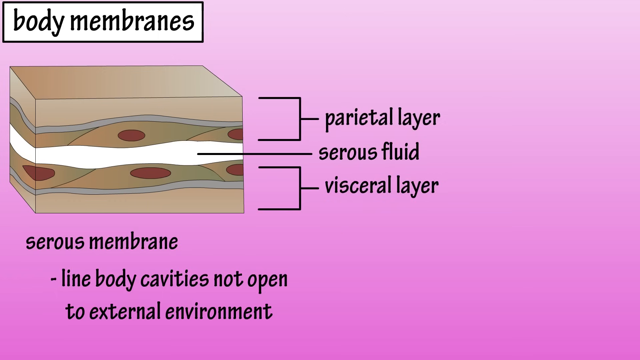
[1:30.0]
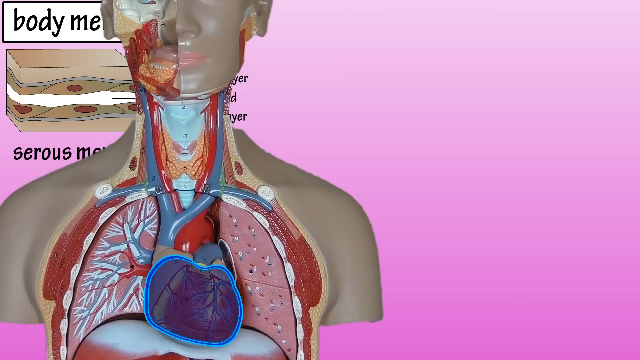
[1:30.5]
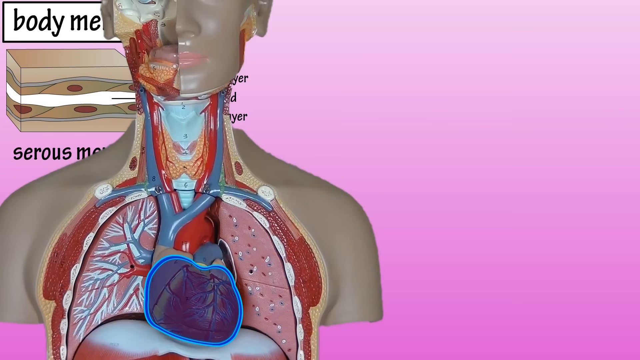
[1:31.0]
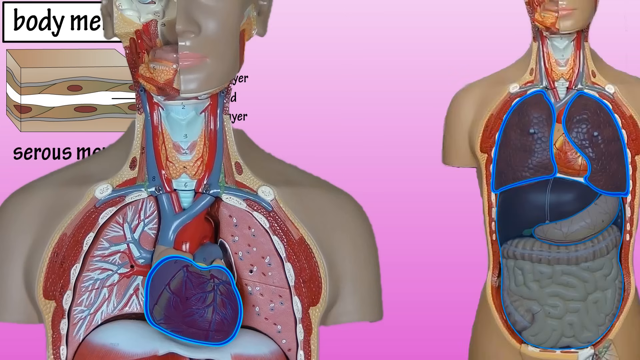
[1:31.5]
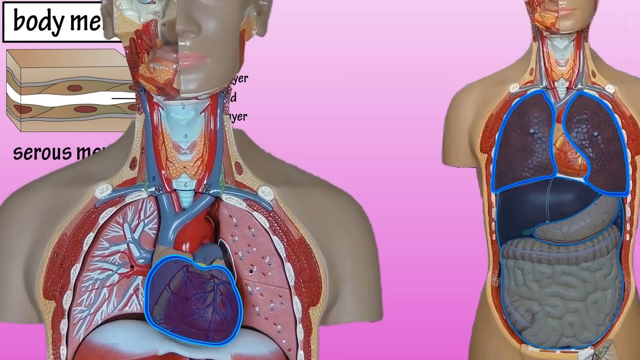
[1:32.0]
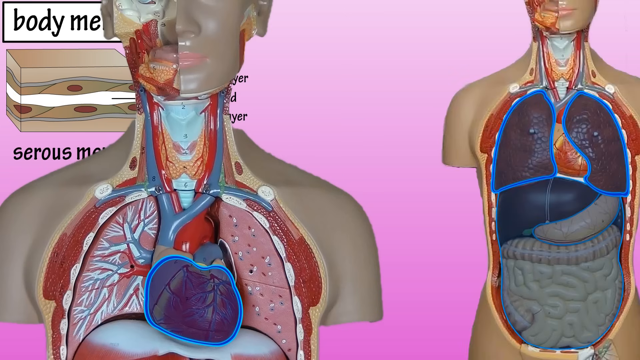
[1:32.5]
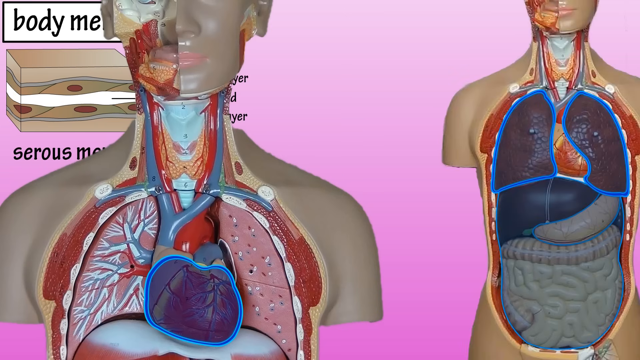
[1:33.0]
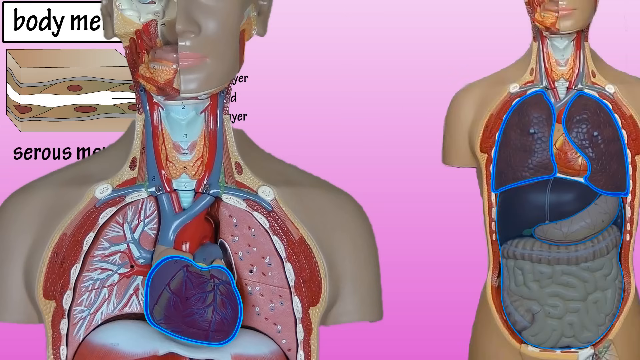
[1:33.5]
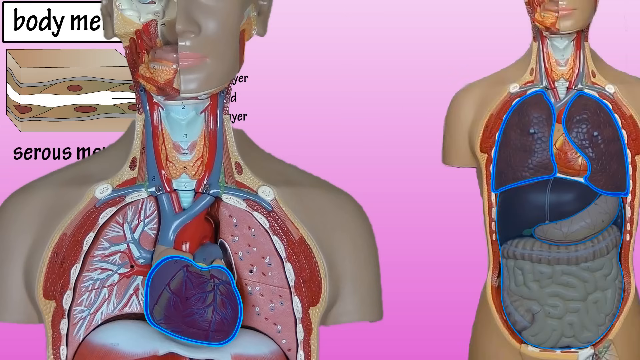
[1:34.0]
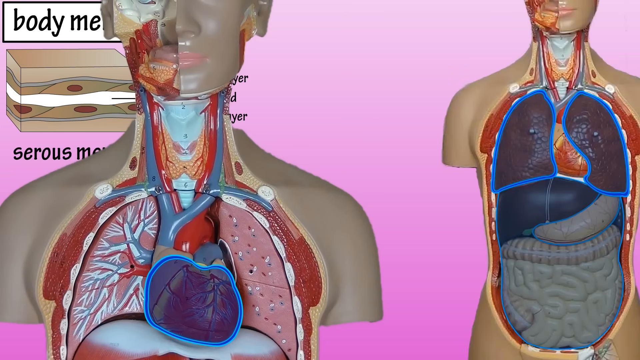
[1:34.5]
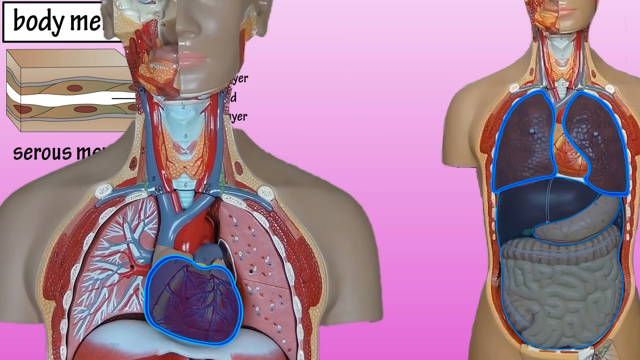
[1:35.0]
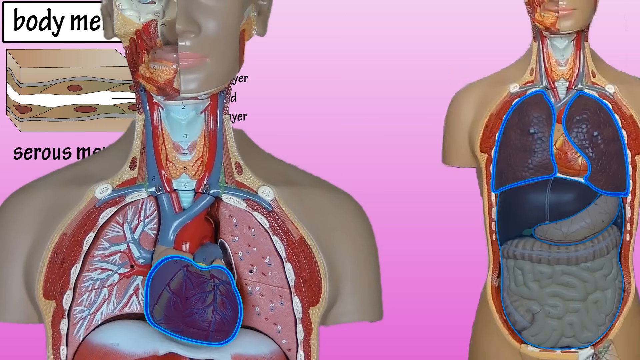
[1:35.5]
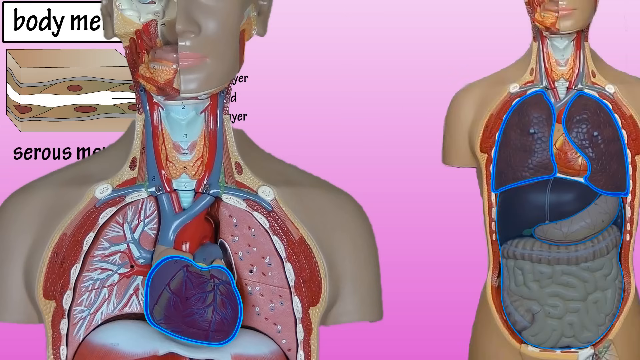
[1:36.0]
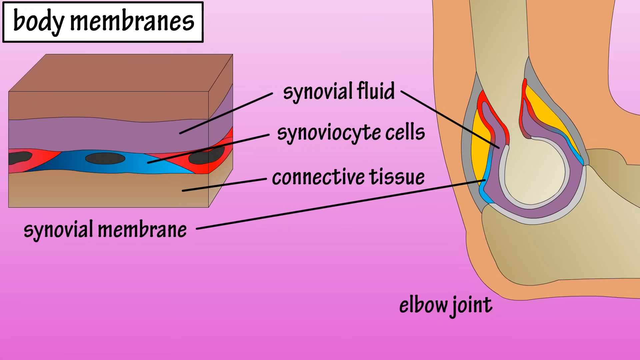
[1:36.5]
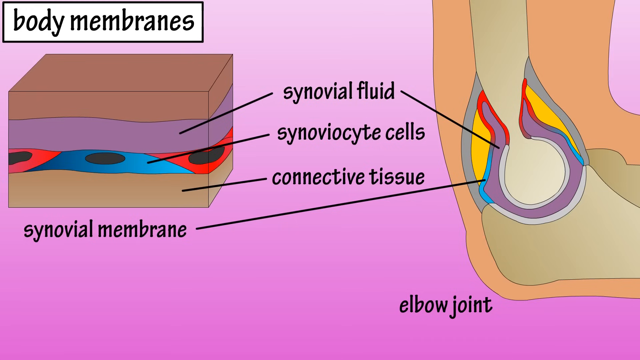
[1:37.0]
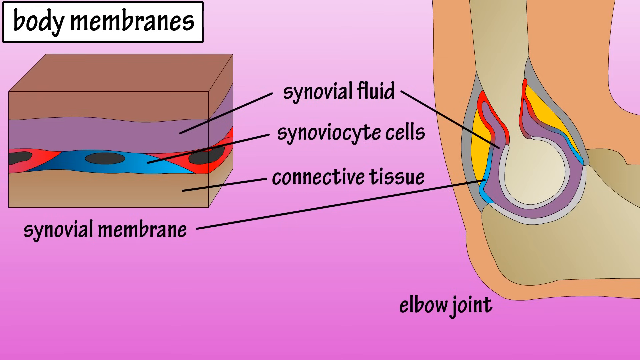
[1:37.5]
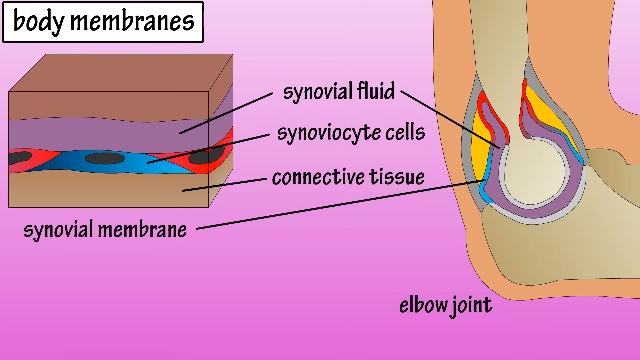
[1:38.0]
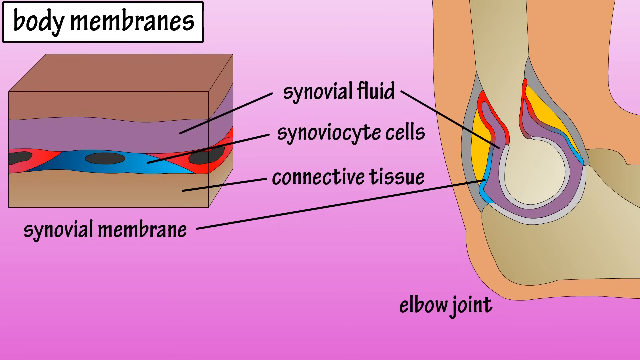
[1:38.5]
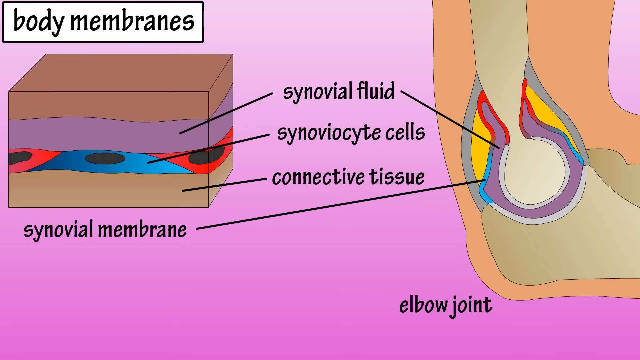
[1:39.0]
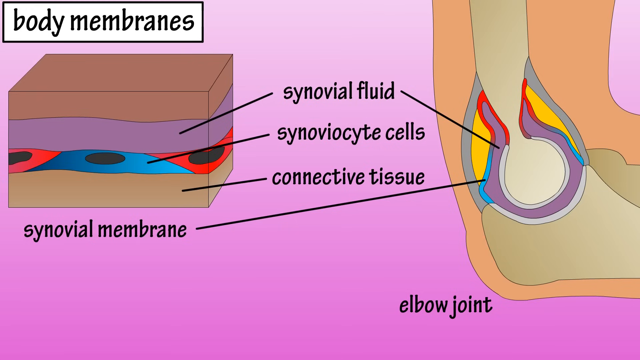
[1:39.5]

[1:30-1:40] An overlay diagram or model of an anatomical model appears, showing the area from the chest to the mid-face, followed by a zoomed-out view of this model with the lungs untouched on the right-hand side of the screen. The screen then transitions completely back to the pink and white gradient background, with the synovial membrane cross-section diagram on the left and a cross-section of the elbow joint on the right, showing a similar view of the elbow joint specifically. Lines connect the synovial membrane's labels to both images. The top label, "synovial fluid", points to the purple part of the diagram, another label points to the blue and red, and "connective tissue" points to the bottom layer of the left image. The black text label "elbow joint" appears under the image on the right.